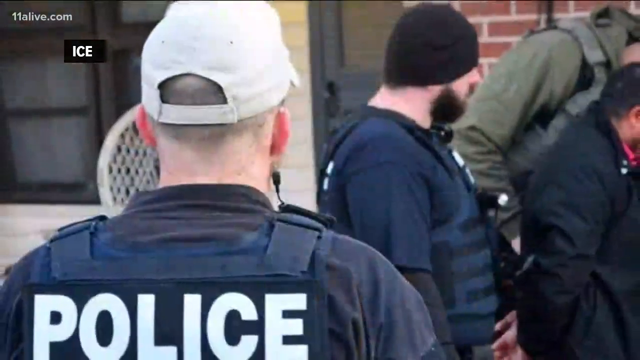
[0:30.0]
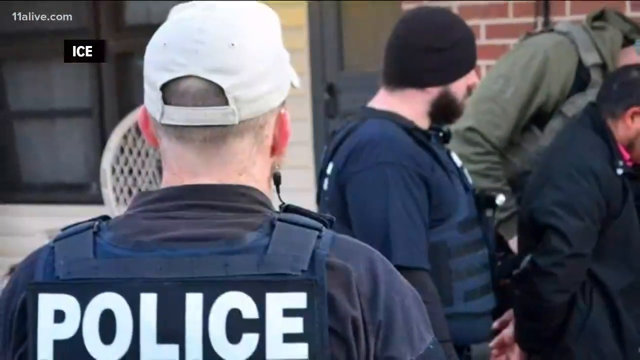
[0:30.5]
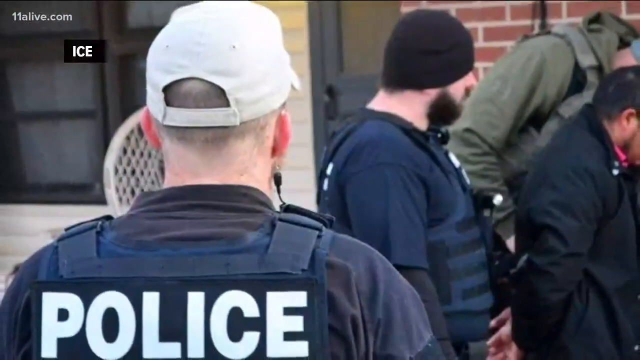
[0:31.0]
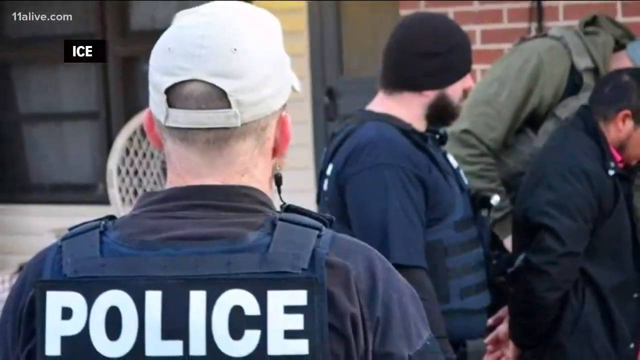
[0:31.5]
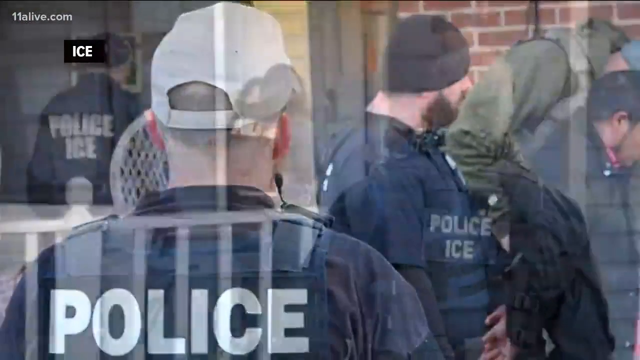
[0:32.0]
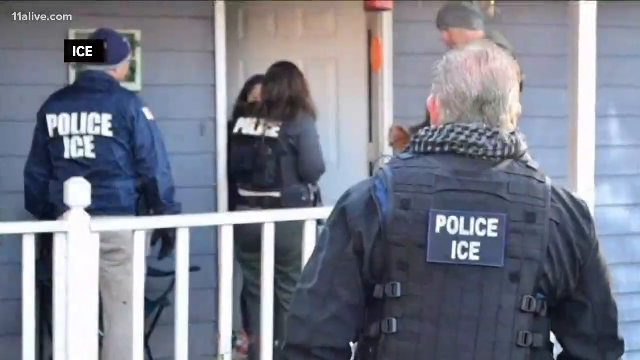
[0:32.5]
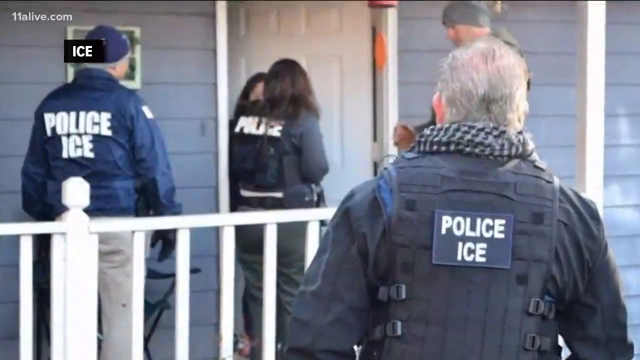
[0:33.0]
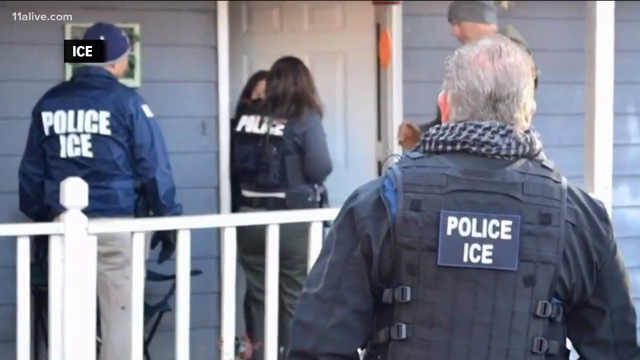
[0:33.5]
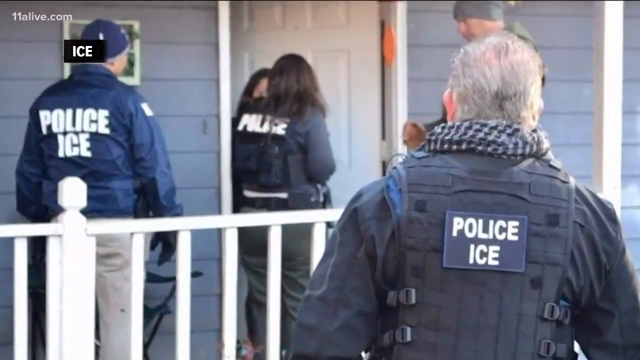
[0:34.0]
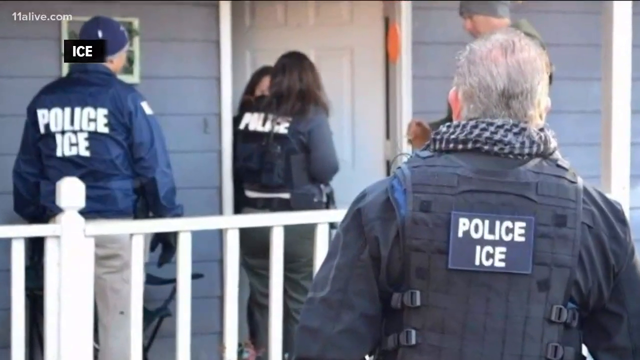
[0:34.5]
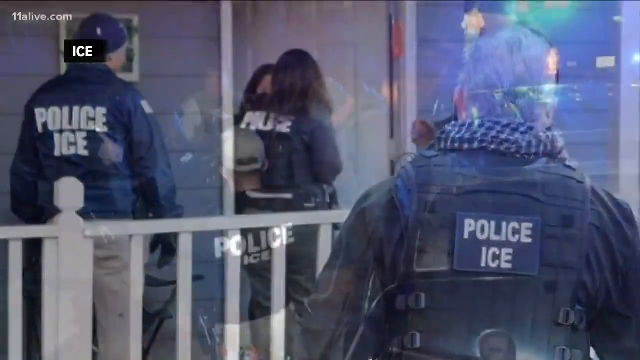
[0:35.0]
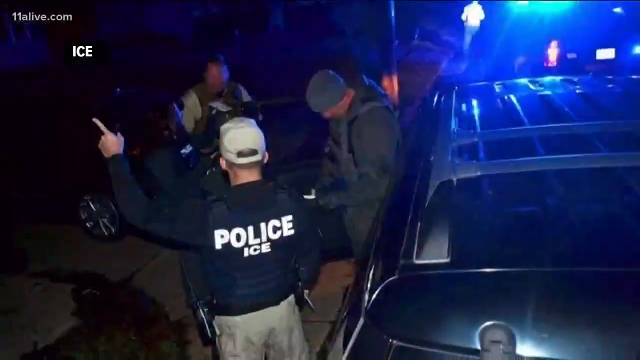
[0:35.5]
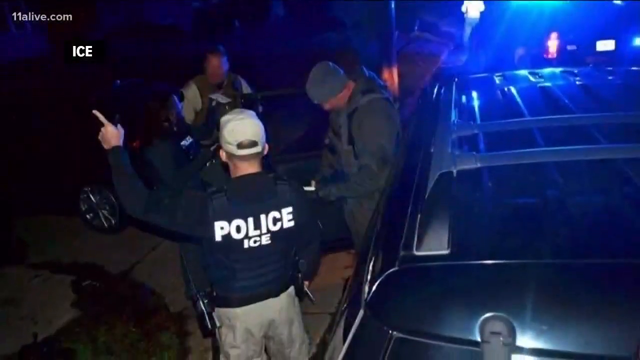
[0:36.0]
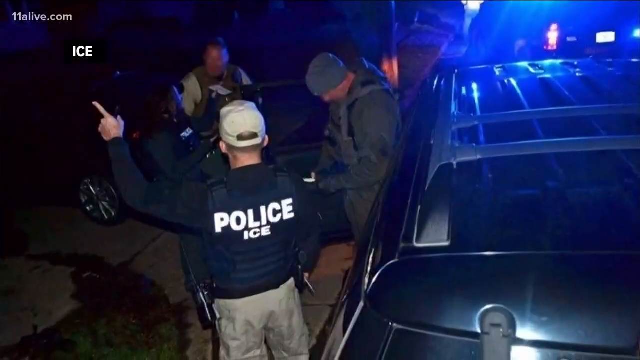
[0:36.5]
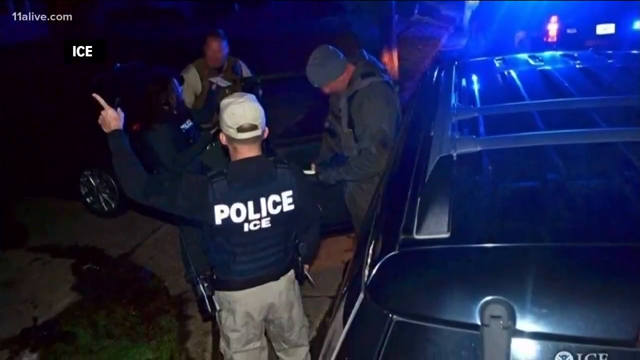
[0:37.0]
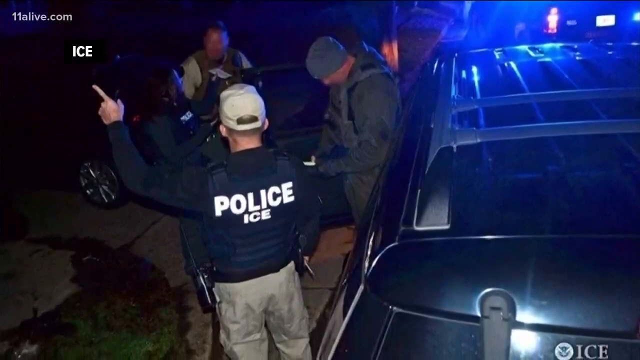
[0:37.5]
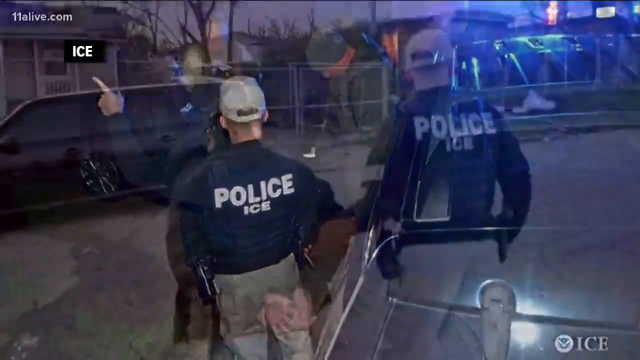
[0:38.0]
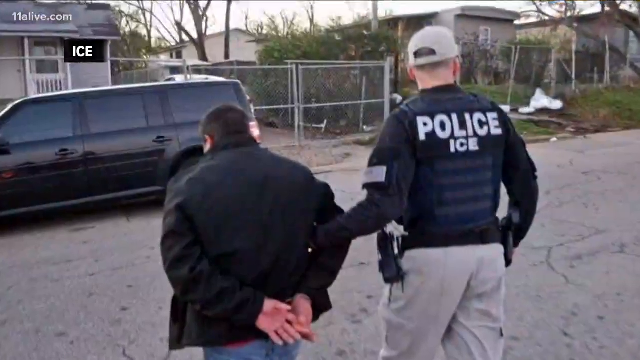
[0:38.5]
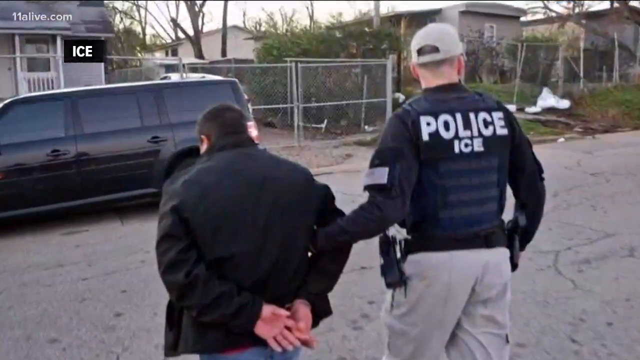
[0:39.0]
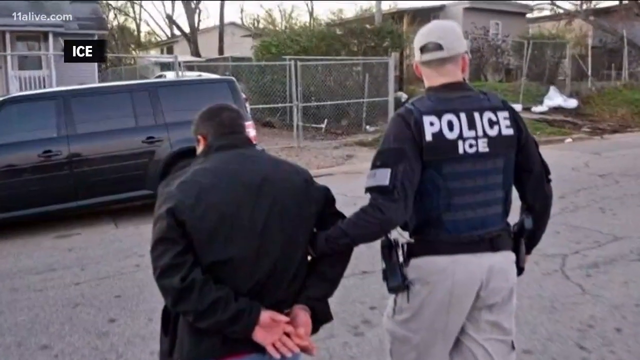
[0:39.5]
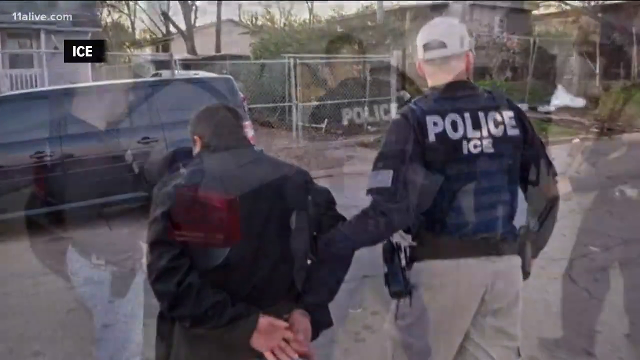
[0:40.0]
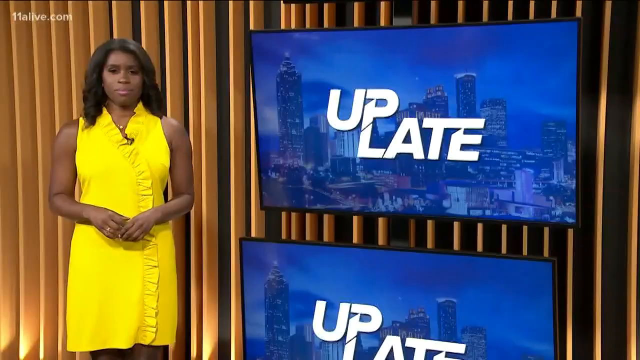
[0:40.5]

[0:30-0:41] Various photos of police and ICE follow, about four or five different photos. The ICE images show maybe four or five groups of people; in one there are shackles, and in another there is a car. A woman wearing a yellow dress is then seen talking.